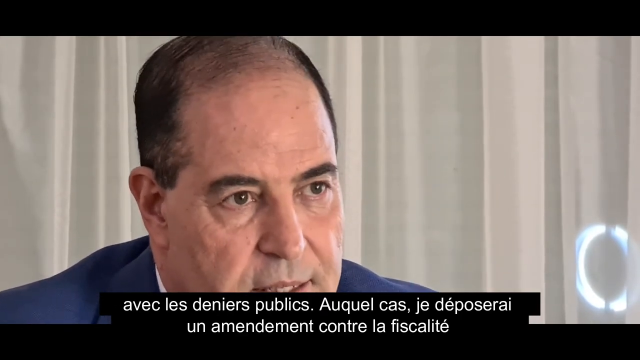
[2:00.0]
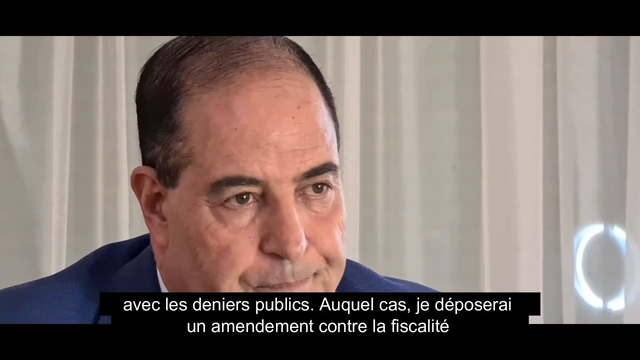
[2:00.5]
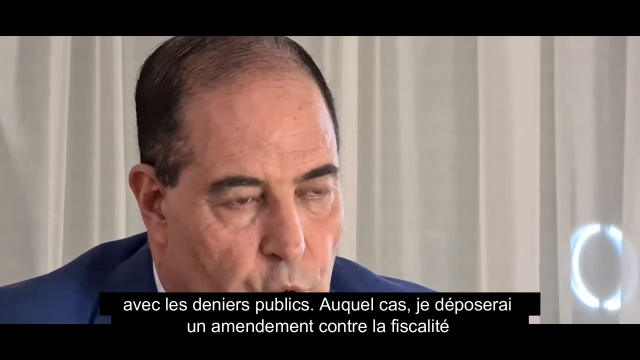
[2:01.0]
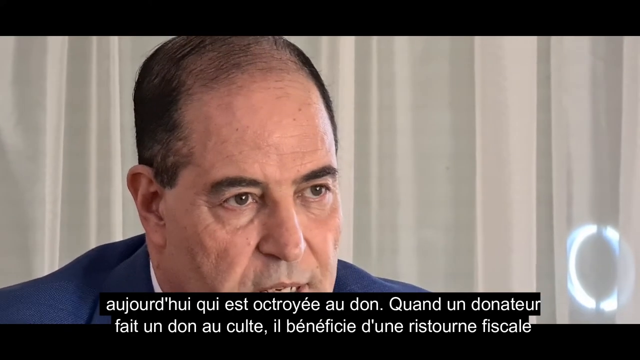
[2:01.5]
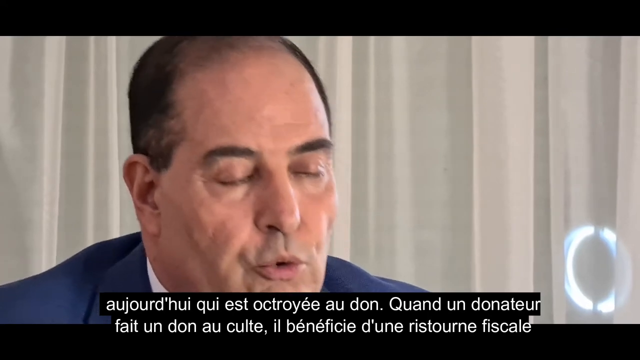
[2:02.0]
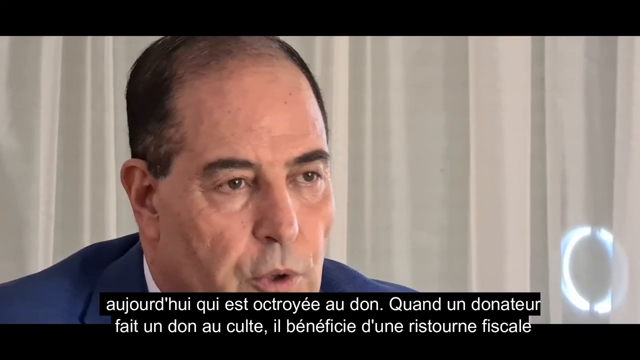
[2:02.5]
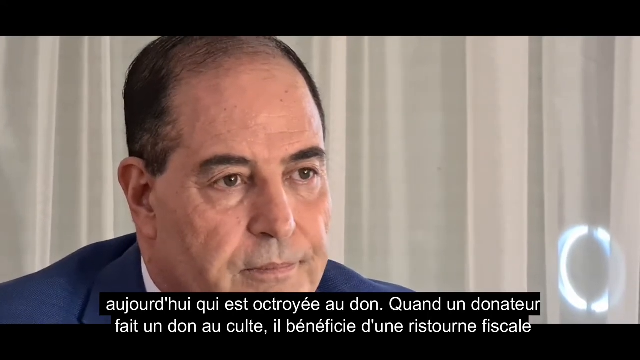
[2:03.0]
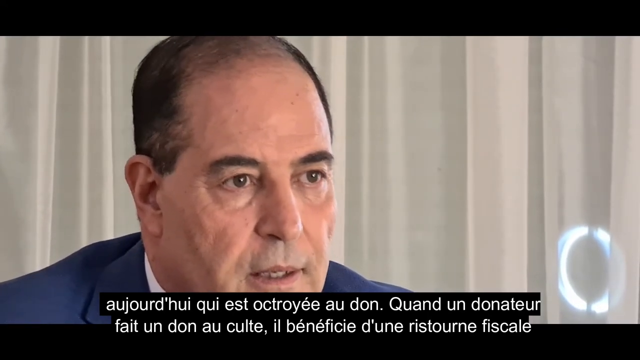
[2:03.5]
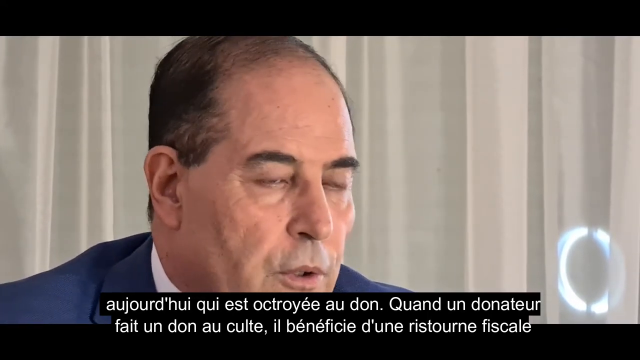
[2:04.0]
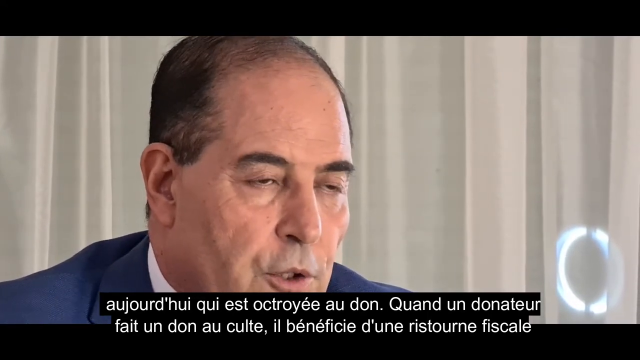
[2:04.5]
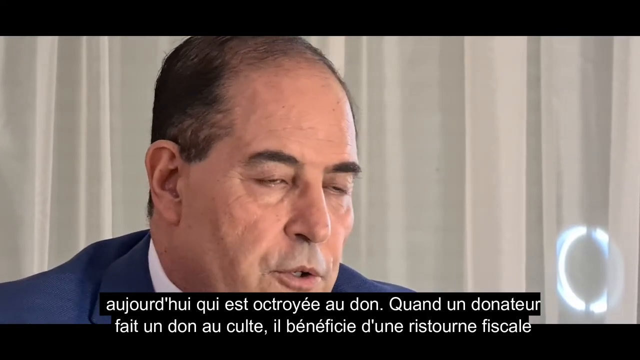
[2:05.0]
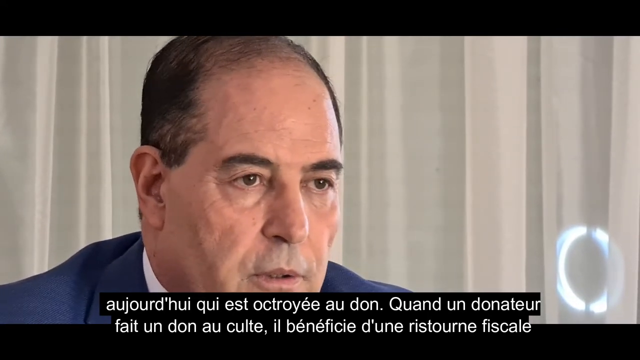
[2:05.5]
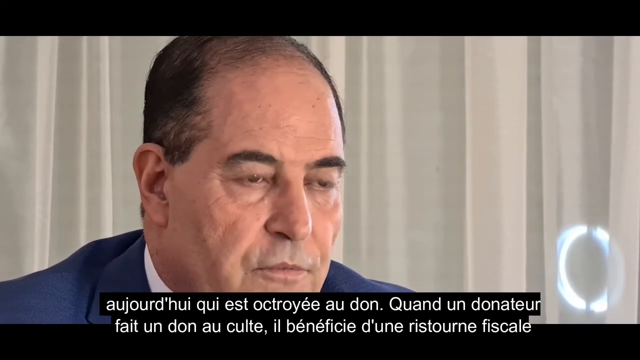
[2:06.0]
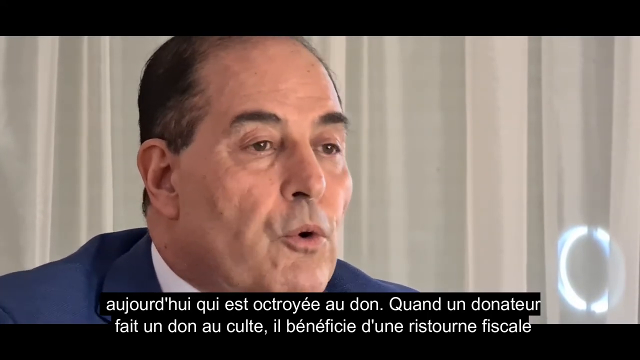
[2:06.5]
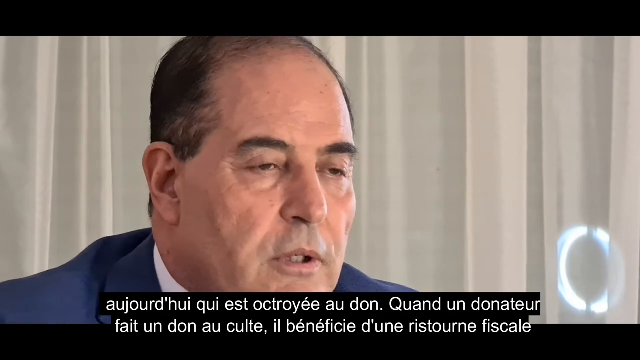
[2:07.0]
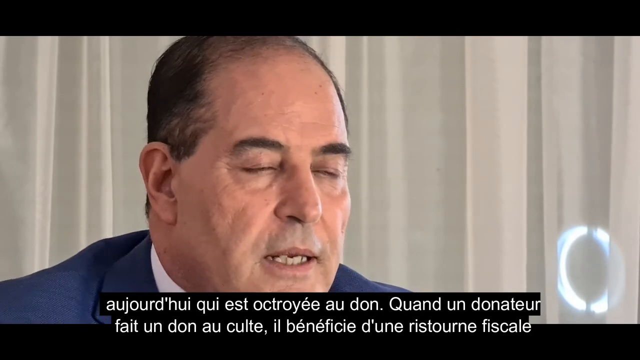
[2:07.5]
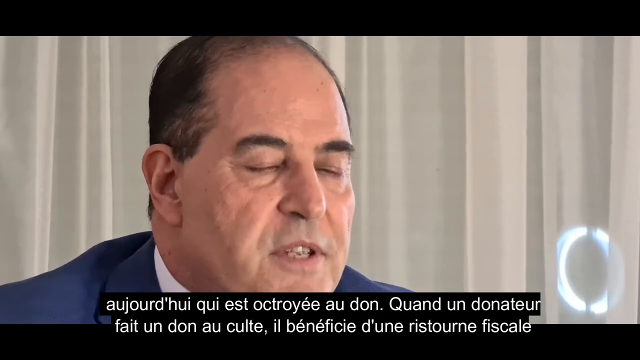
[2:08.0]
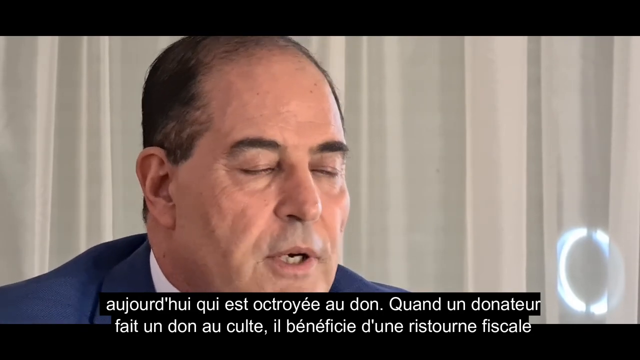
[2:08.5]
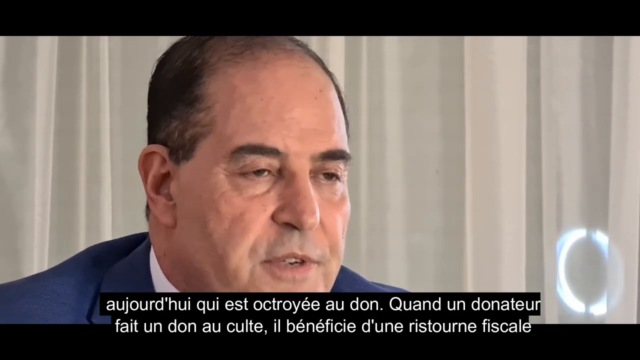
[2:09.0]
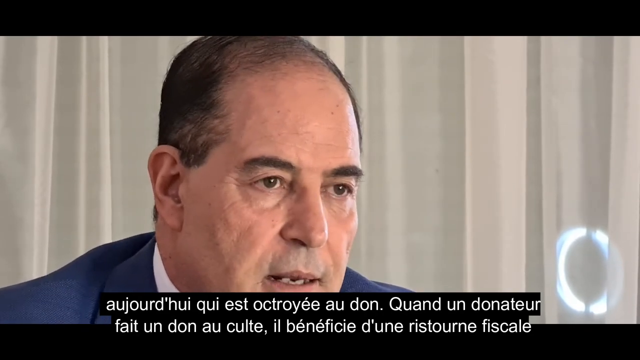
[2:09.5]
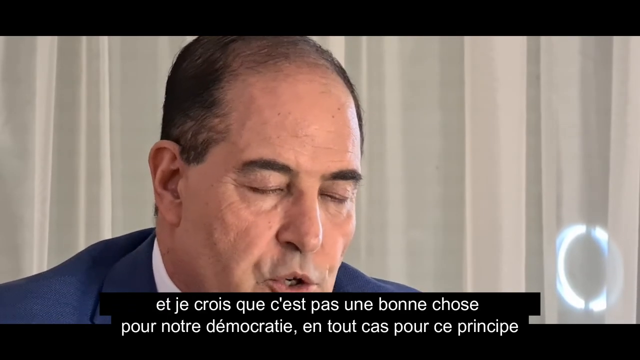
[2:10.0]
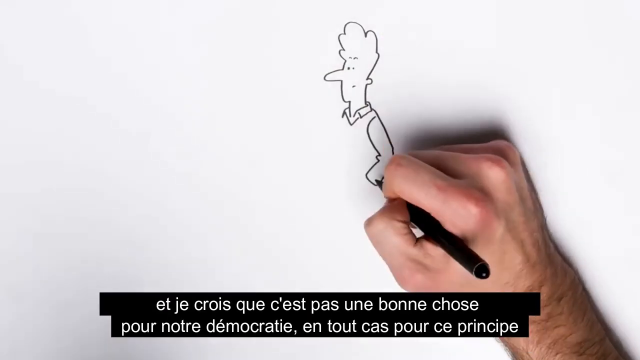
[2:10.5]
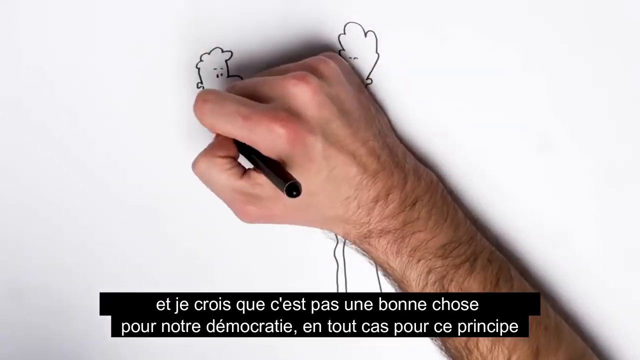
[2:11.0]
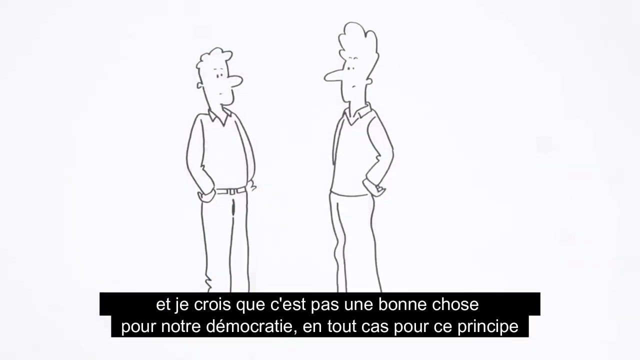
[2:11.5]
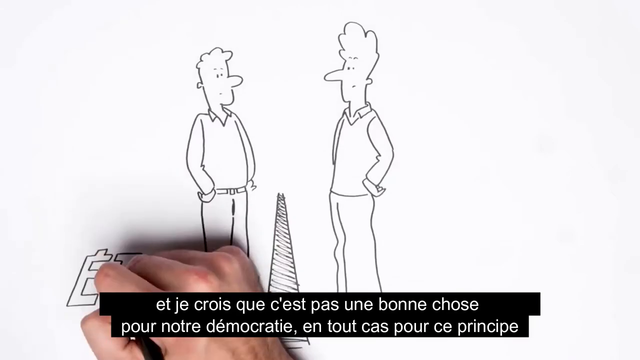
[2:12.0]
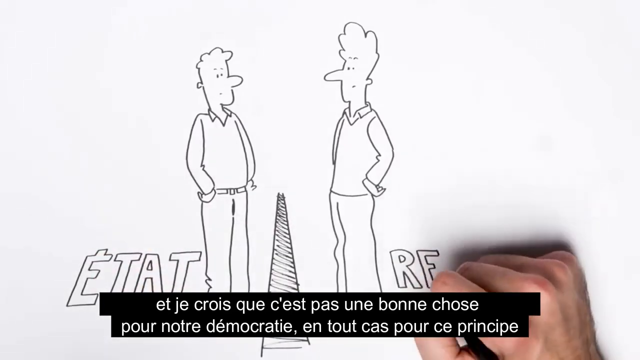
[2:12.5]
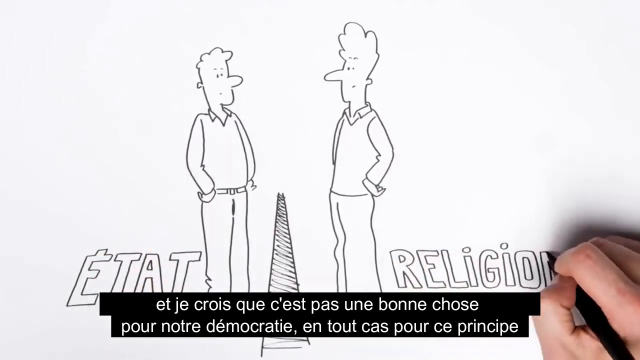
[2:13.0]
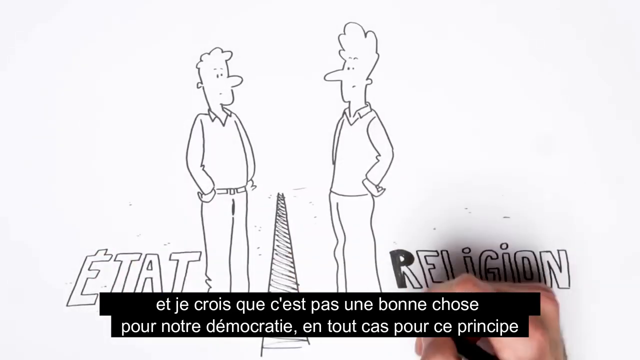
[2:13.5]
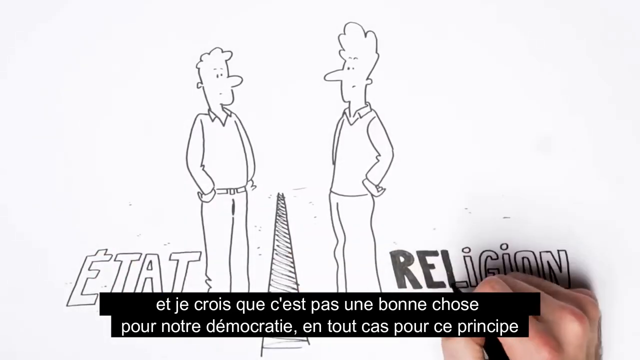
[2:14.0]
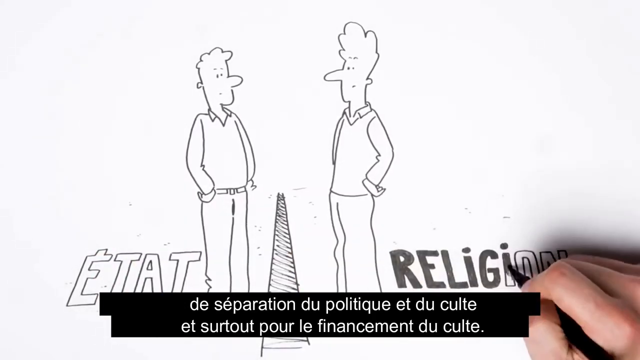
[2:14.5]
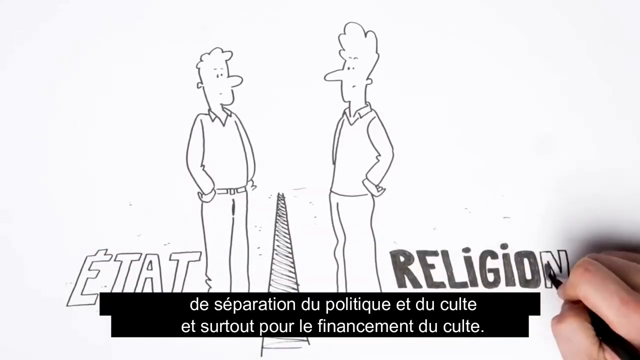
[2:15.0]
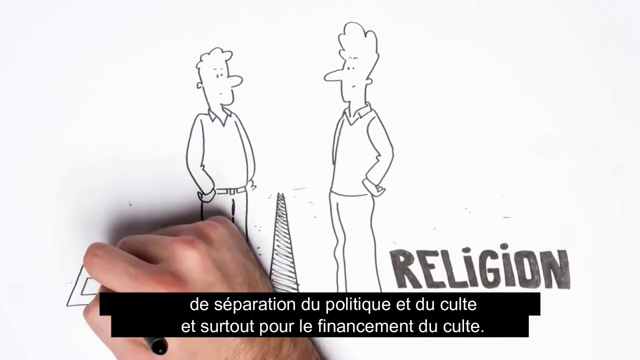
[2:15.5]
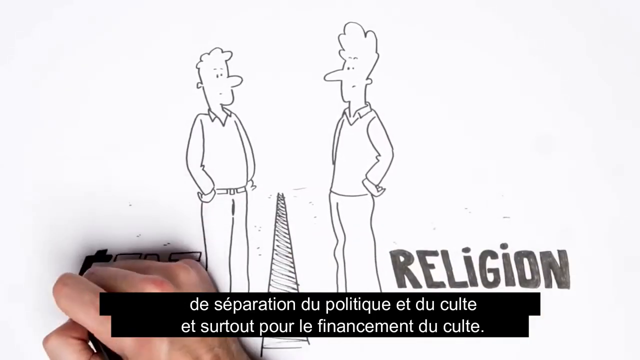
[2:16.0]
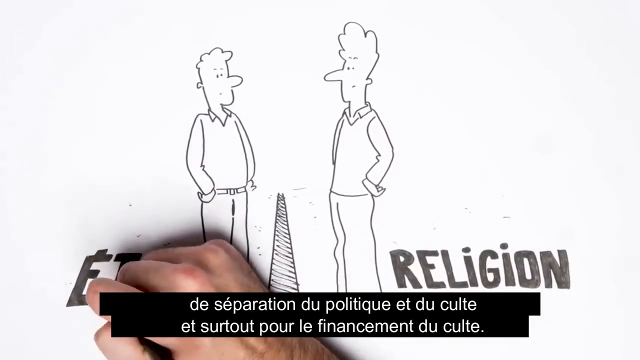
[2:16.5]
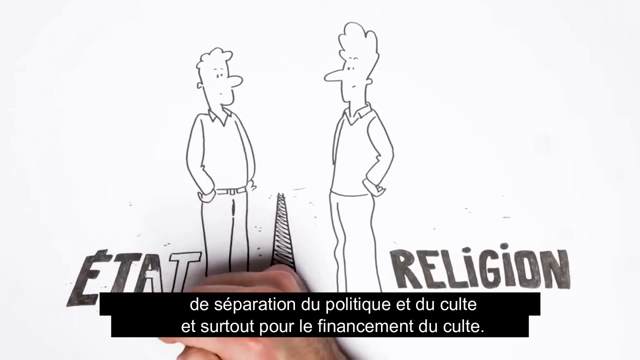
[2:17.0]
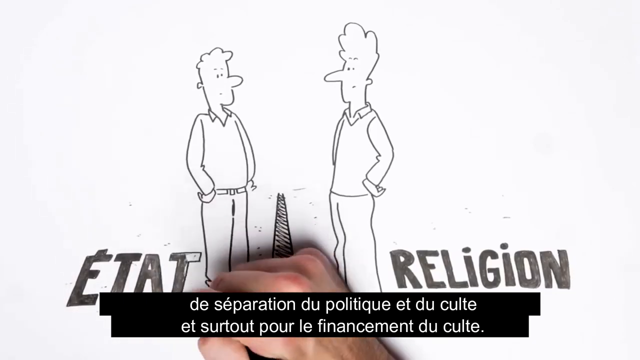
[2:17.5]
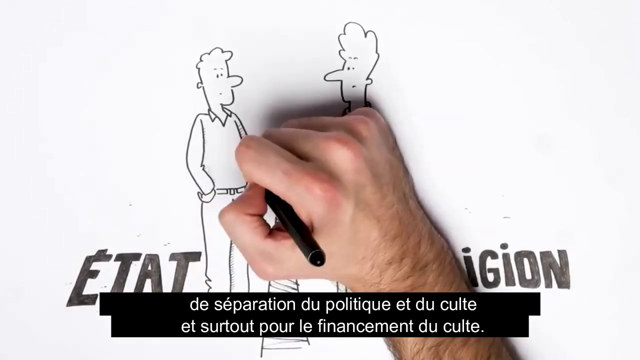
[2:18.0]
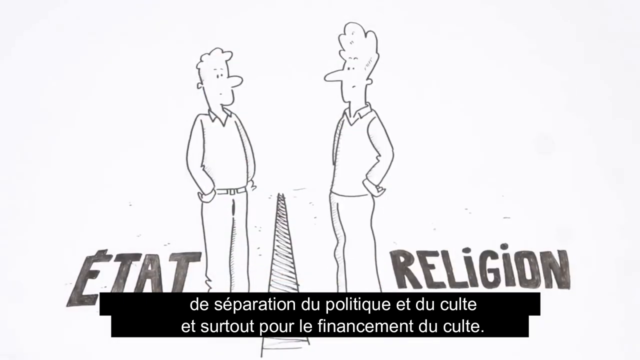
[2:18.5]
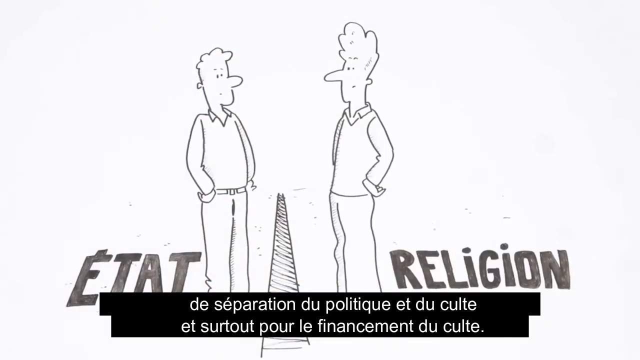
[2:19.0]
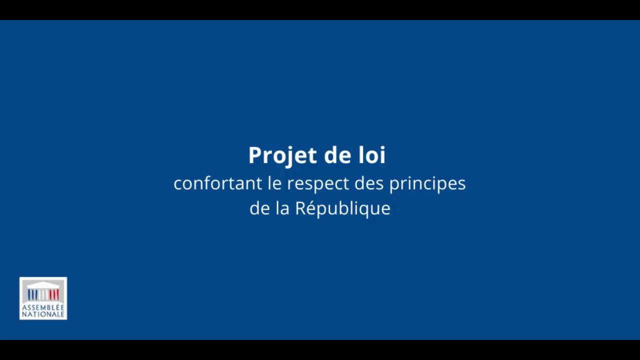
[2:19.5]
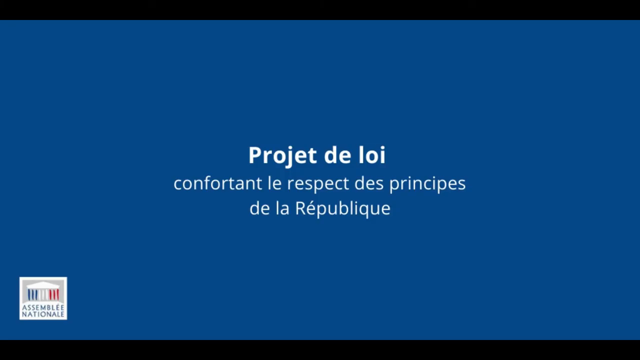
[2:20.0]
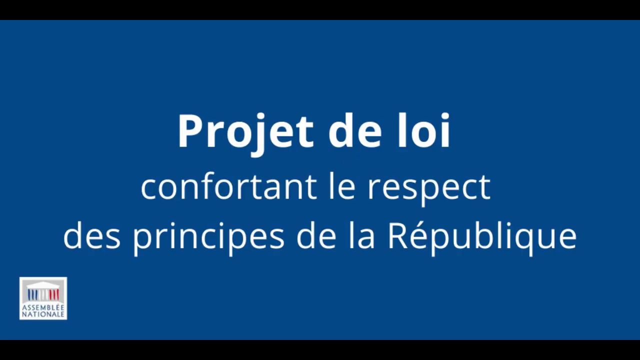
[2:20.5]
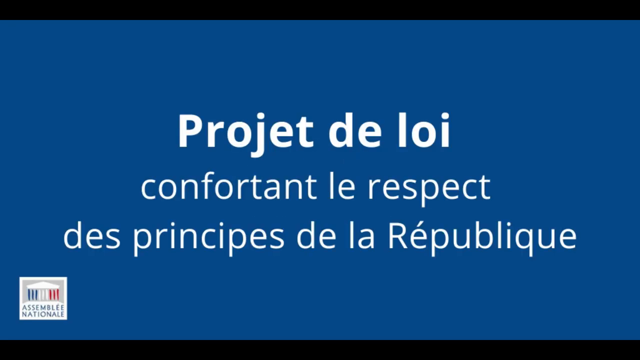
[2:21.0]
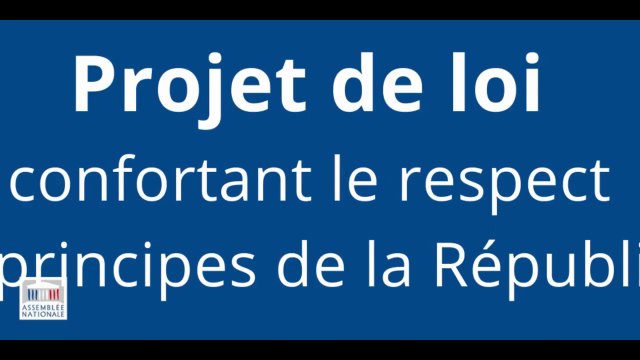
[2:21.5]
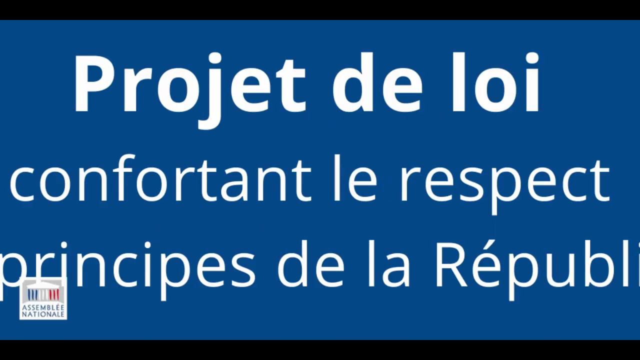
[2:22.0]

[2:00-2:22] The man continues to talk with a very serious look, the view zoomed in close to his face and subtitles at the bottom. The hand then draws two people facing each other, writing the word "etat" on the left and the word "religion" on the right. There is some sort of divider on the ground between them that separates the two people; the person on the left looks at the person on the right, and the person on the right looks at the person on the left. The scene then shifts to an all-blue background with captions in the middle, which become enlarged and fill the whole page from left to right.